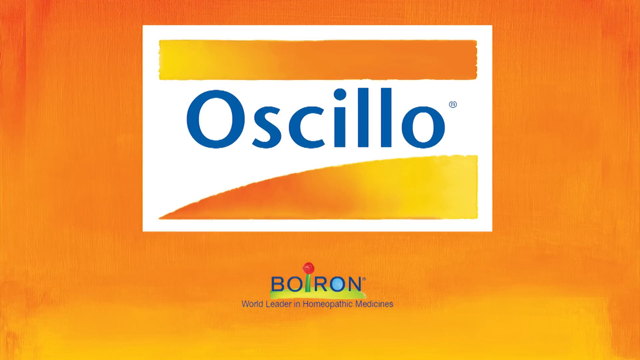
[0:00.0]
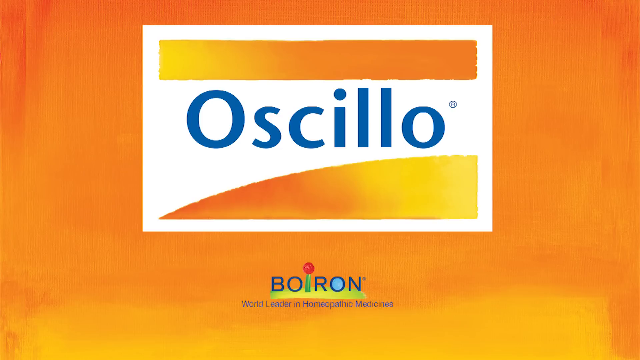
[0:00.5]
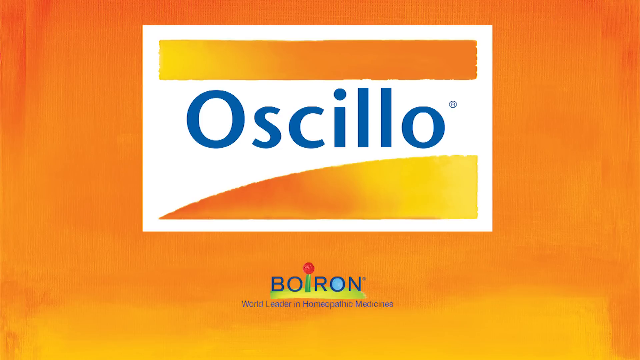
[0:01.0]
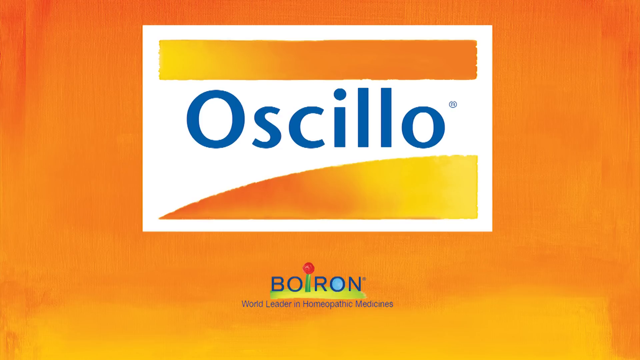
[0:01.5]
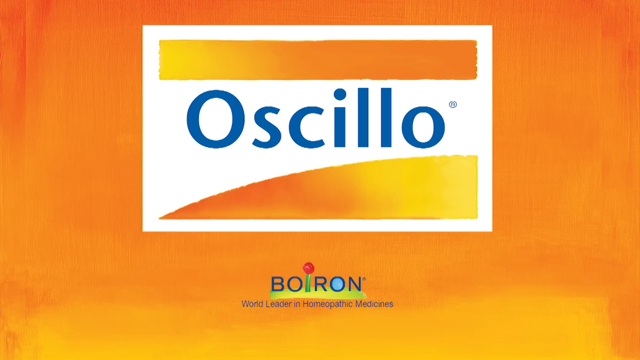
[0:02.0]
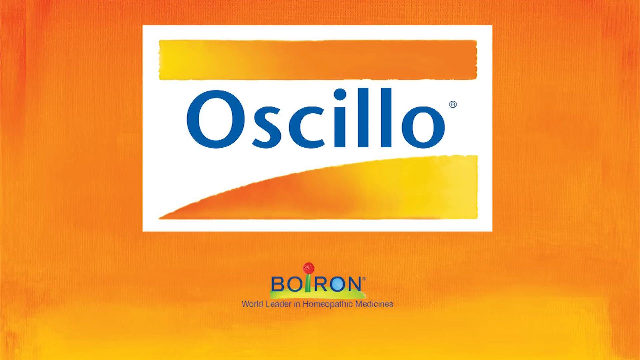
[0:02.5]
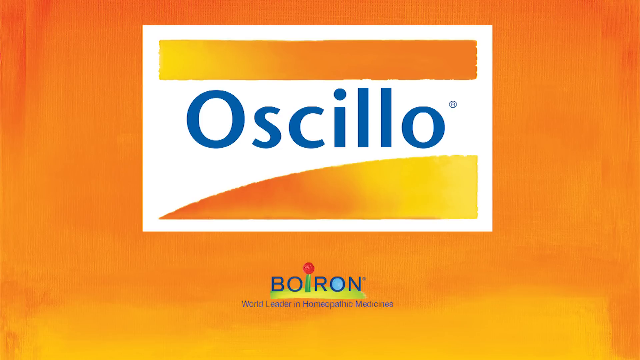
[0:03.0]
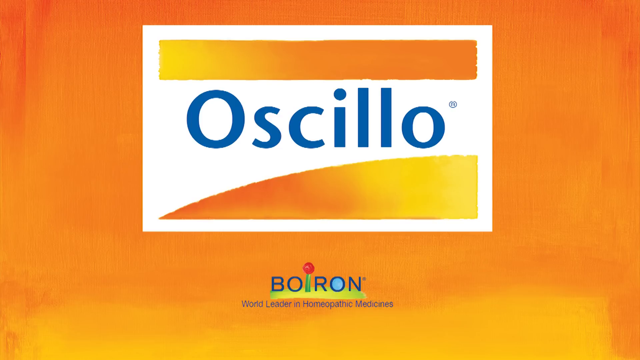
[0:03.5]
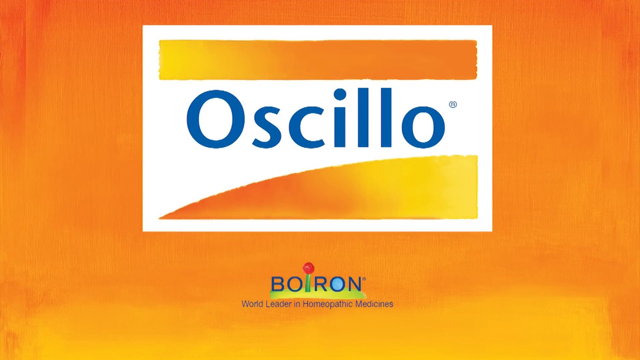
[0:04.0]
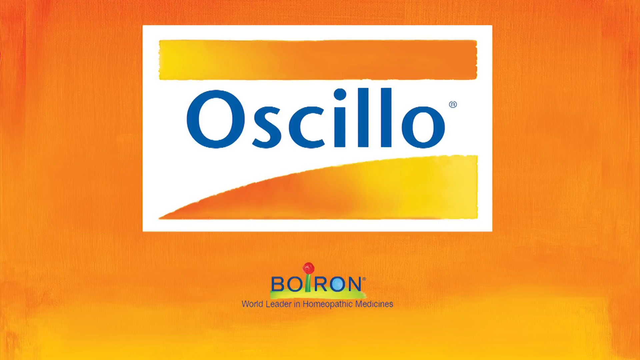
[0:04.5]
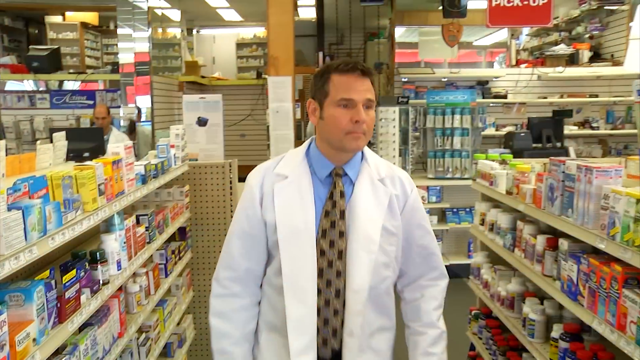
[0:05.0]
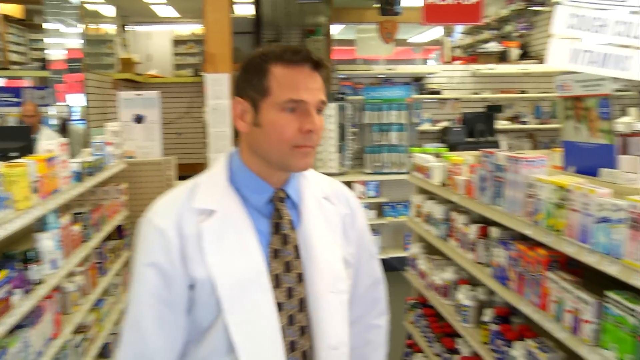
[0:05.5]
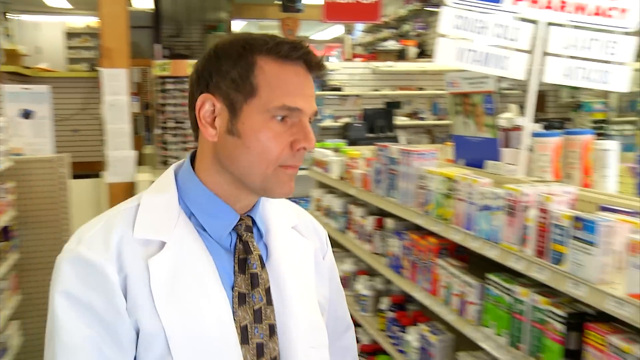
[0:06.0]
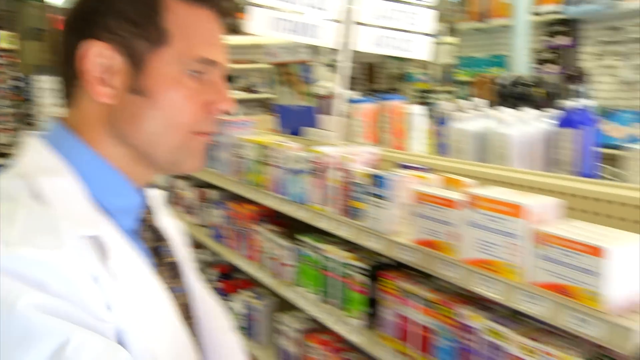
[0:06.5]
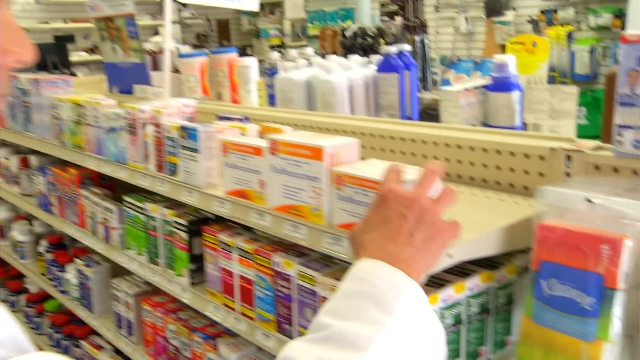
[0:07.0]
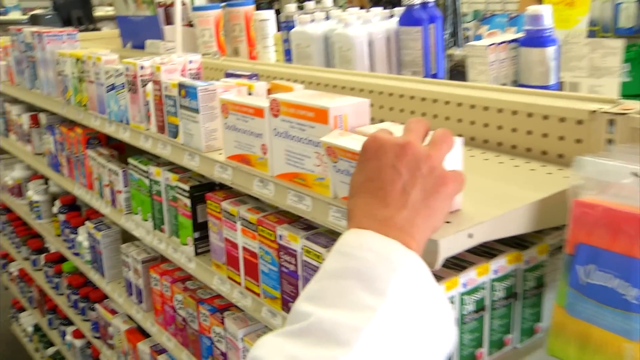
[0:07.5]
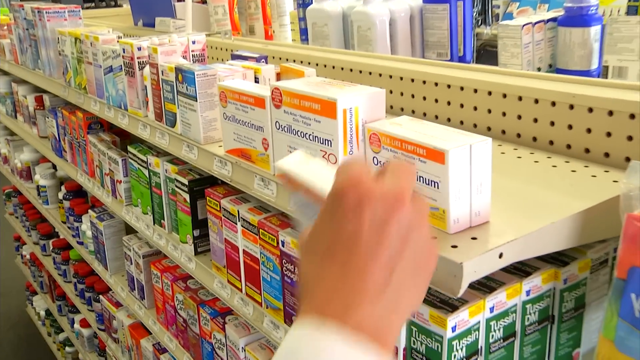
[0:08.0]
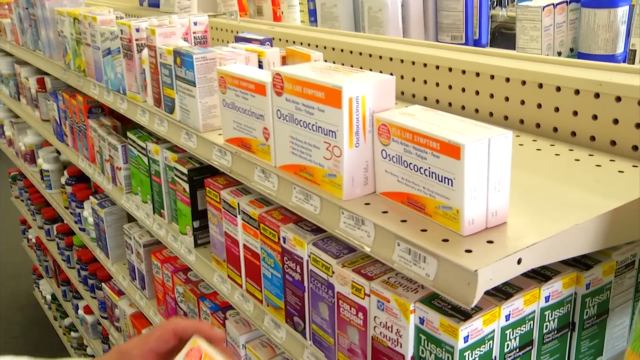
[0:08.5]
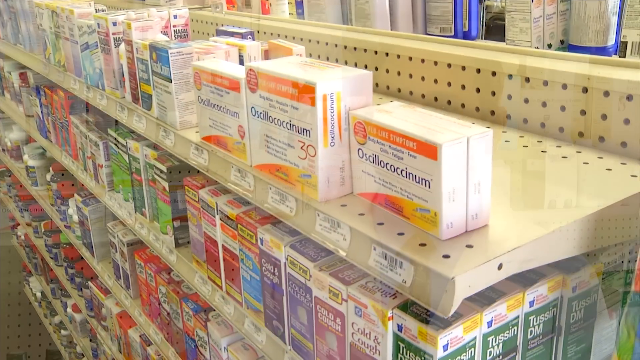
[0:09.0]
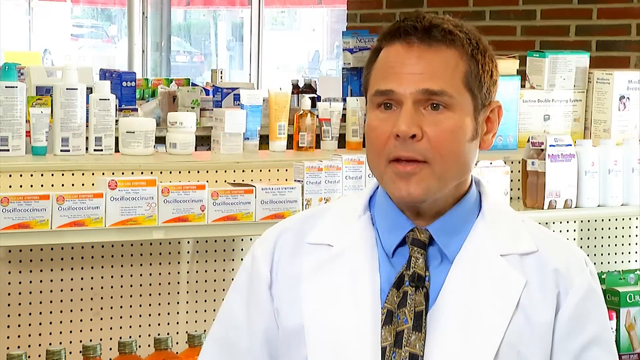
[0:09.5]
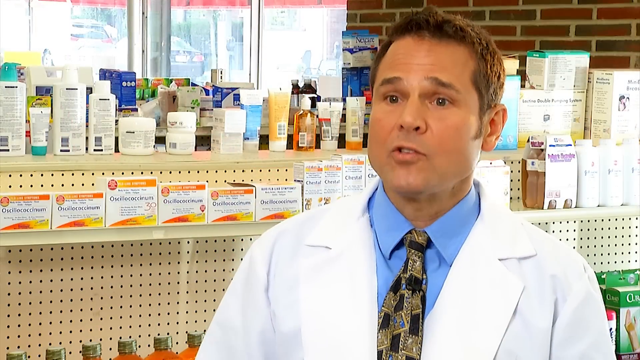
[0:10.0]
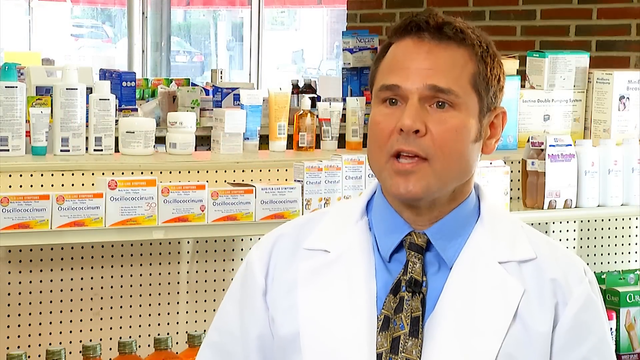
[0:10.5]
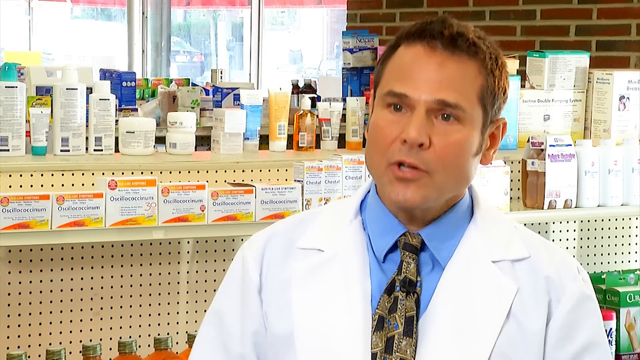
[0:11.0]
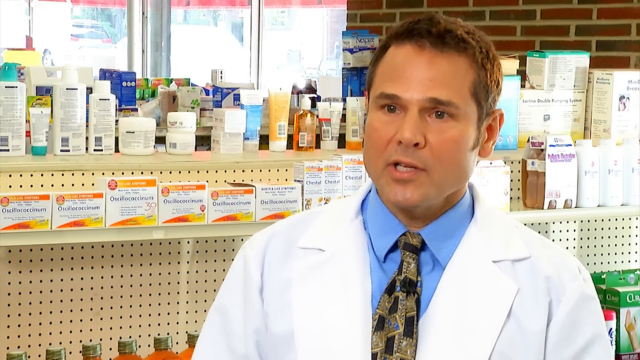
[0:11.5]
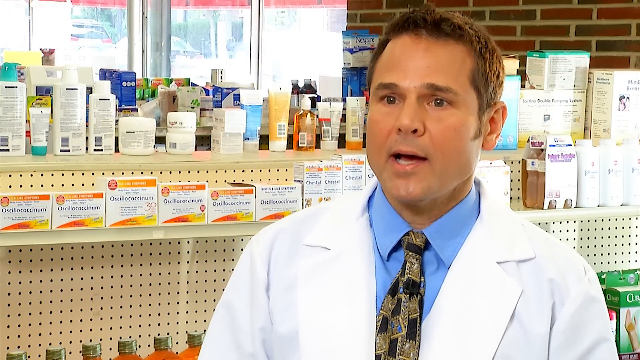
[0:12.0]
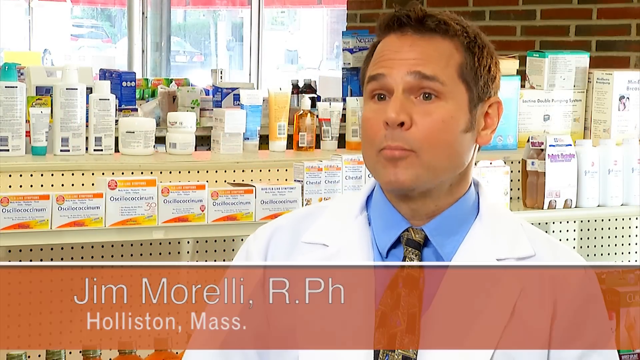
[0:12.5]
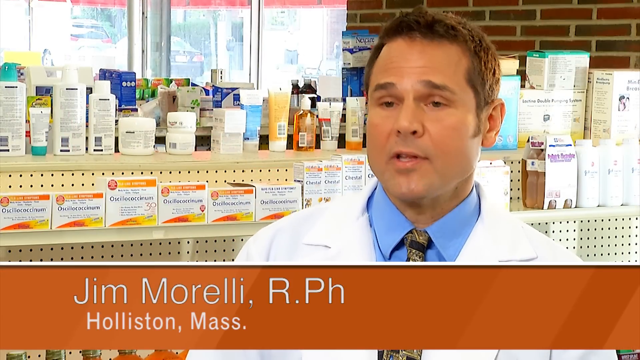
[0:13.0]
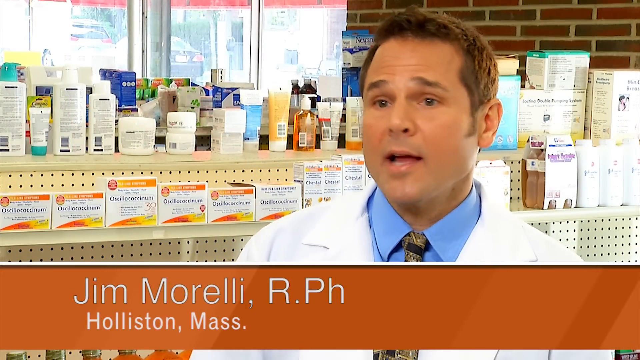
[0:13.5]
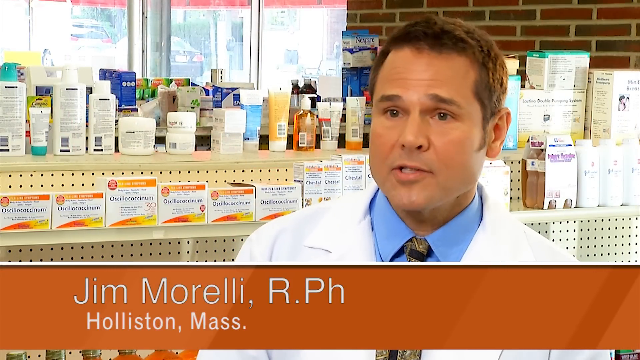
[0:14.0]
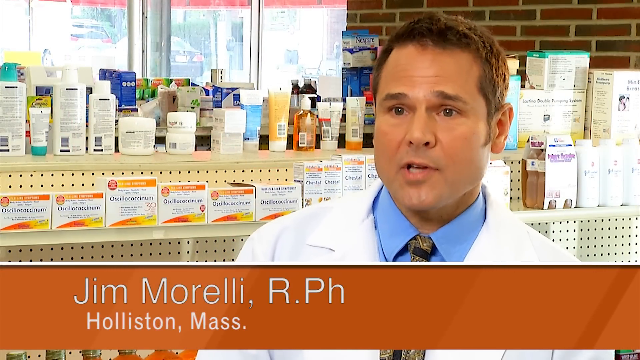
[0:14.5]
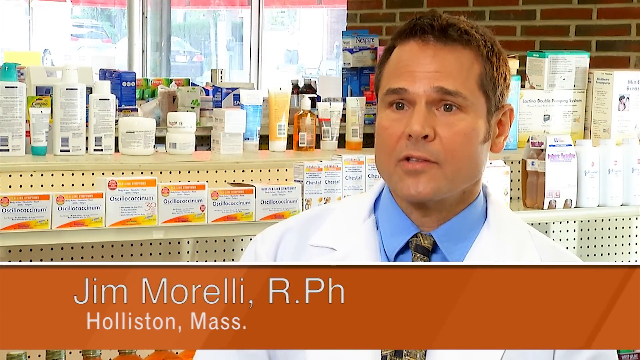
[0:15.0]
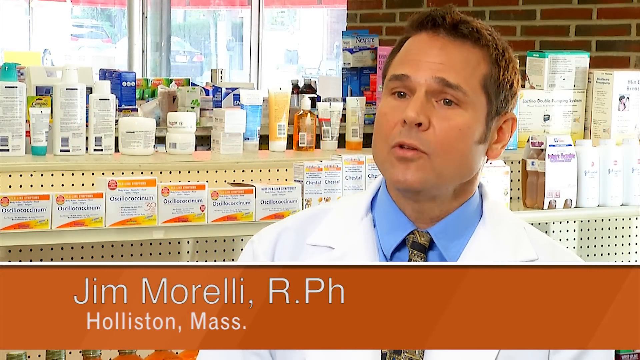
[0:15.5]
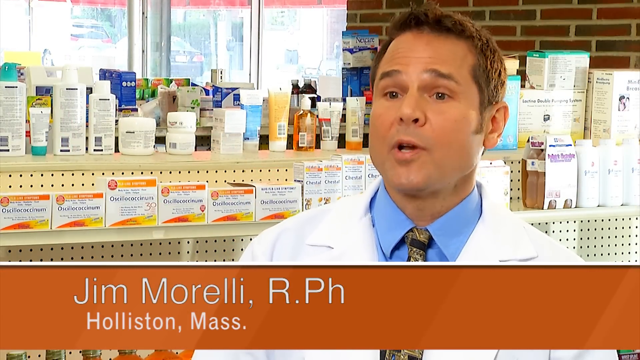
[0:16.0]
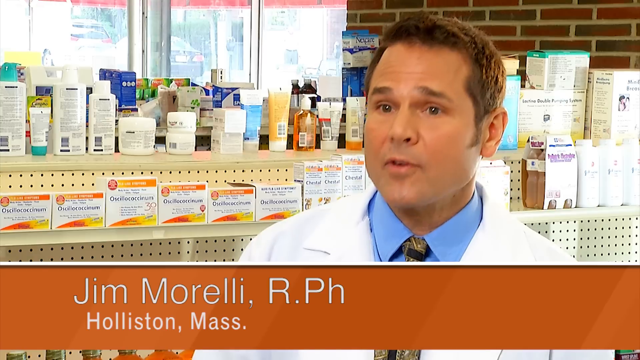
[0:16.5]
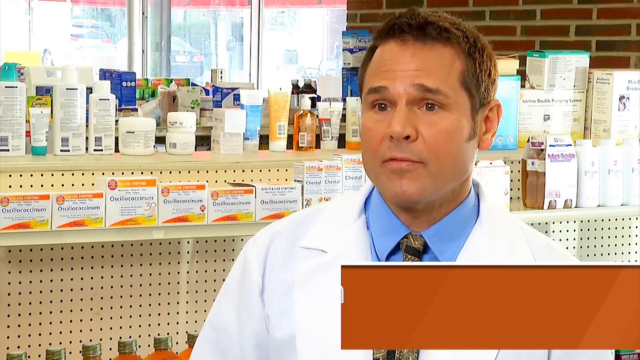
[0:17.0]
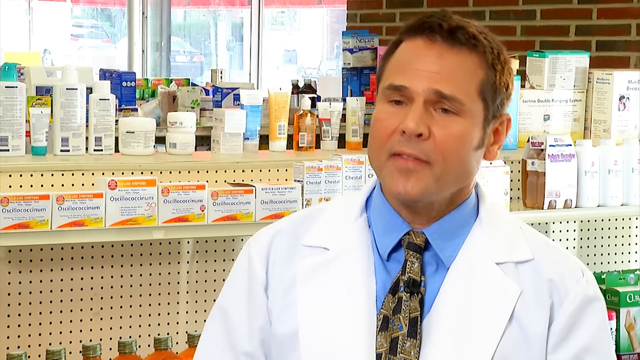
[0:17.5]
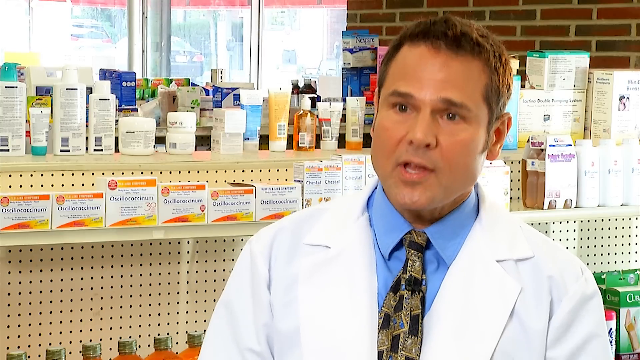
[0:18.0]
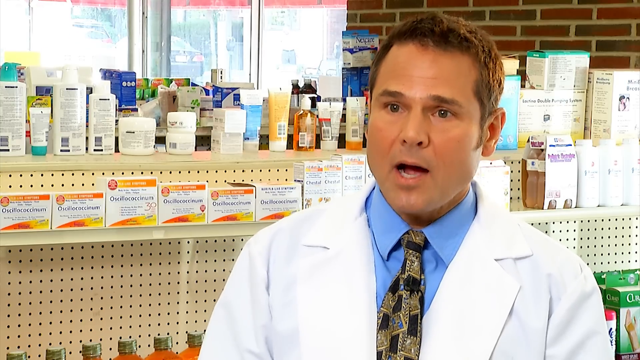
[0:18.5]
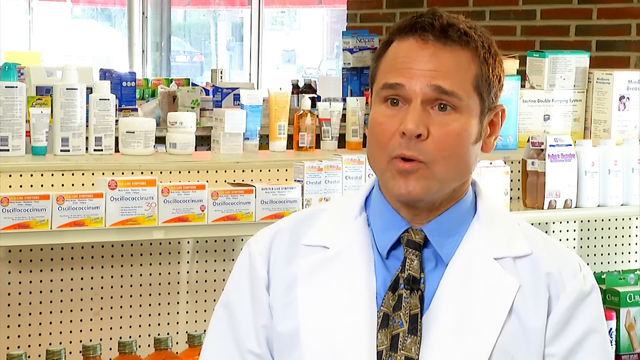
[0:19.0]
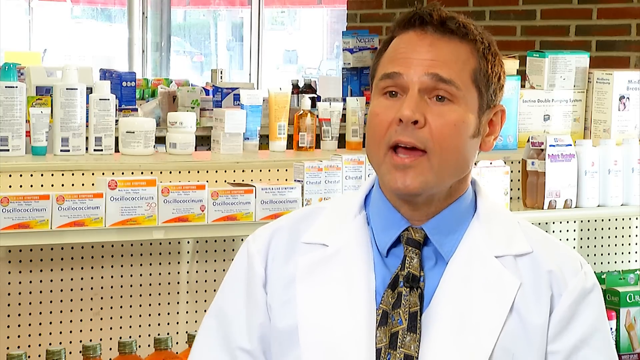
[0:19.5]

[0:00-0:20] The video opens on an orange background with a white horizontal rectangle in the center of the screen. Inside the rectangle is blue writing that reads "Oscillo", with a braided yellow-to-orange bar above the writing and a curved orange bar below it. Below the white rectangle is the word "Boiron". This slide stays on screen for four seconds and then transitions to an image of what appears to be the shelves of a pharmacy. On the left and right are small packets that look like shower-related products, as well as medication. A man in a white lab or chemist-type coat walks down the aisle toward the camera. Under the coat he wears a blue shirt and a brown and grey tie with a square pattern of alternating brown and grey squares. As he walks, he turns to his left (screen right) and the camera pans to him looking at an item on a shelf: a small medication box, white with an orange bar across the top and an orange graded curved image at the bottom. He picks up the packet with his right hand and looks at it. The image then fades to the man sitting and looking at the camera, talking, with the same white boxed product with the orange bar on shelves behind him. He talks to the camera earnestly. His name appears on screen as "Jim Morelli, r.ph.", along with text stating that he is from Holliston, Massachusetts. He talks to the camera quite passionately, occasionally shrugging his shoulders for emphasis.